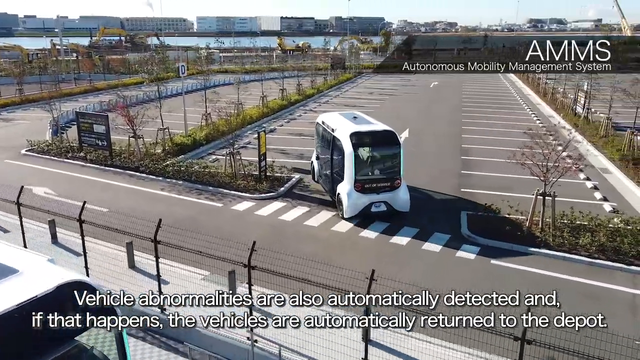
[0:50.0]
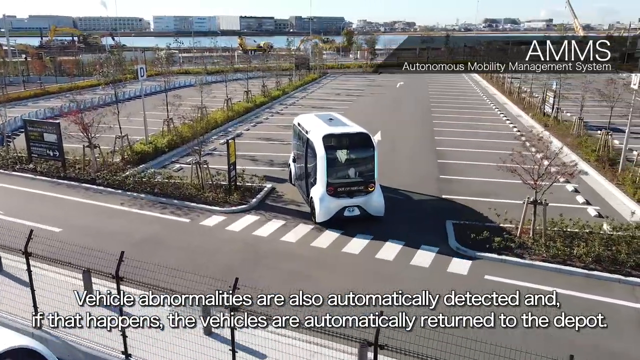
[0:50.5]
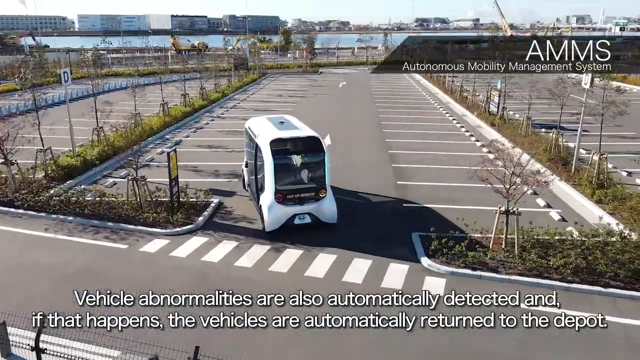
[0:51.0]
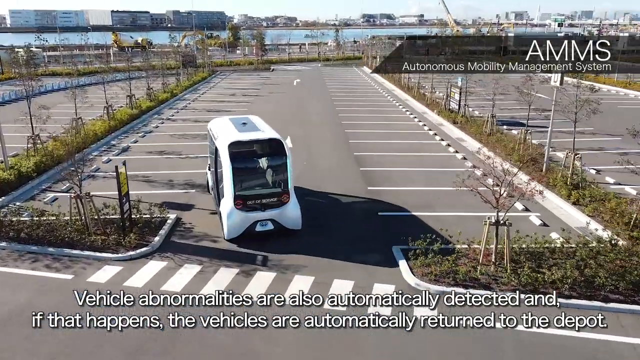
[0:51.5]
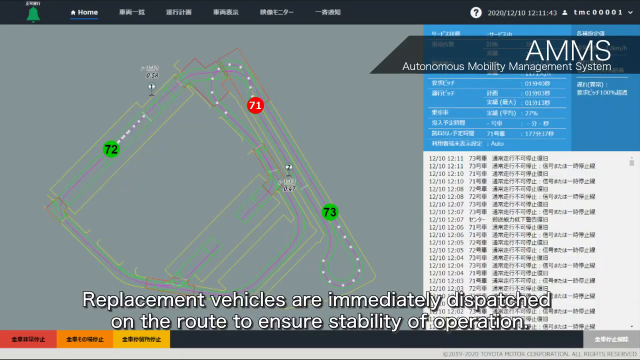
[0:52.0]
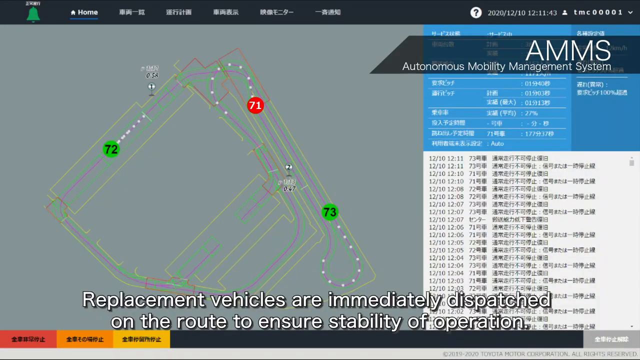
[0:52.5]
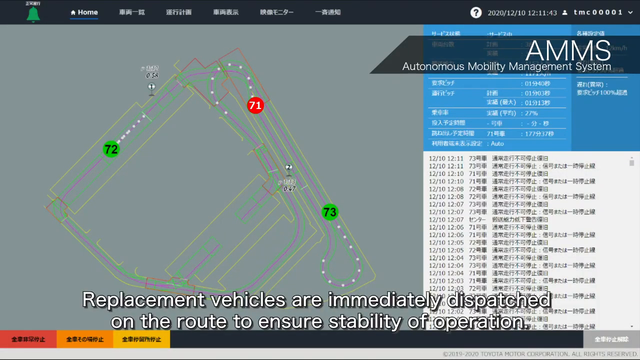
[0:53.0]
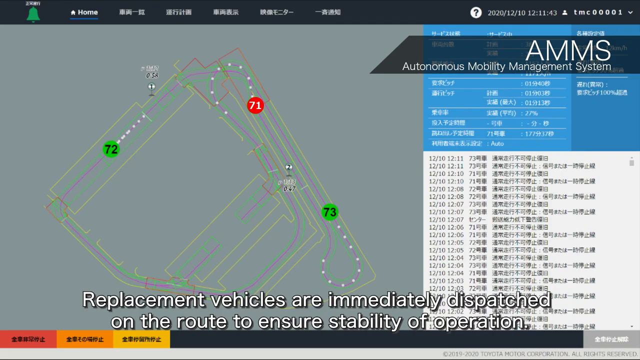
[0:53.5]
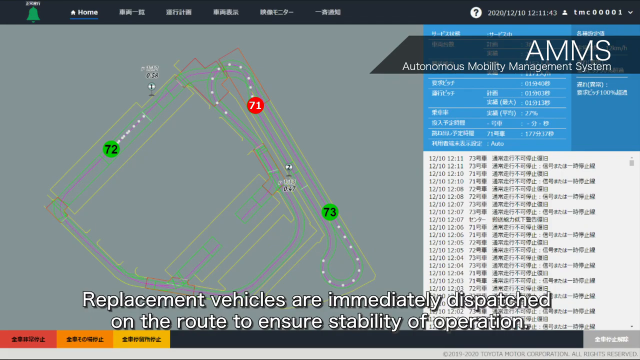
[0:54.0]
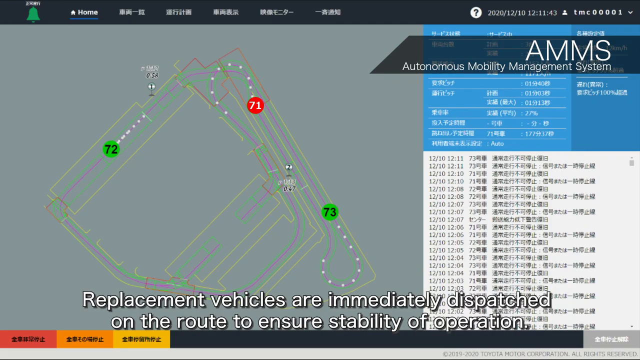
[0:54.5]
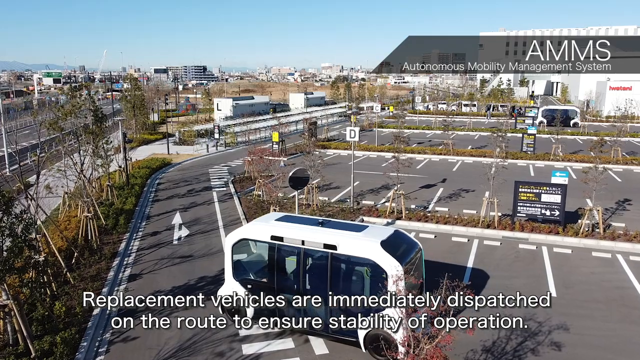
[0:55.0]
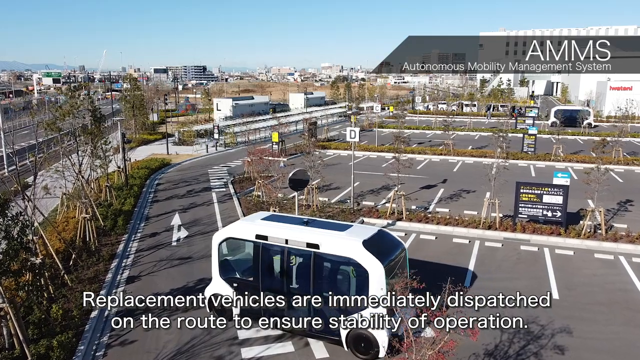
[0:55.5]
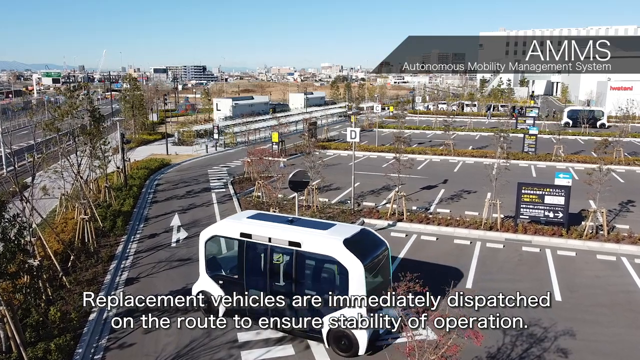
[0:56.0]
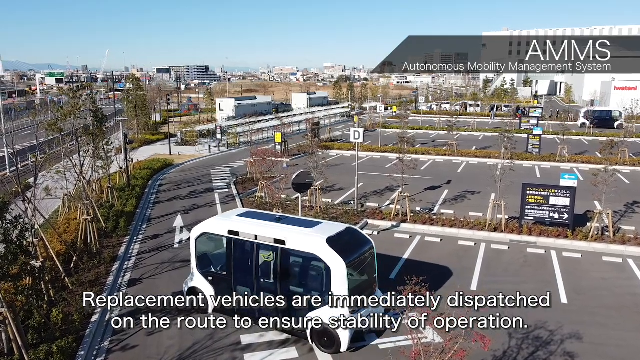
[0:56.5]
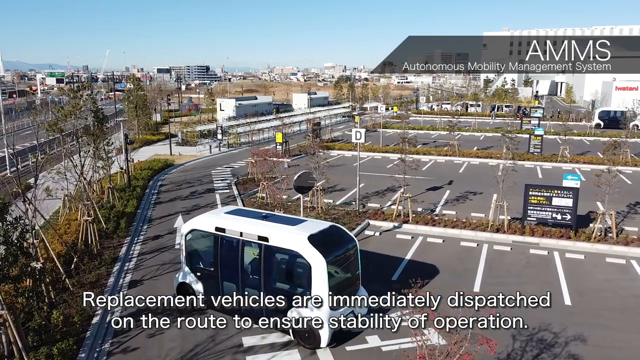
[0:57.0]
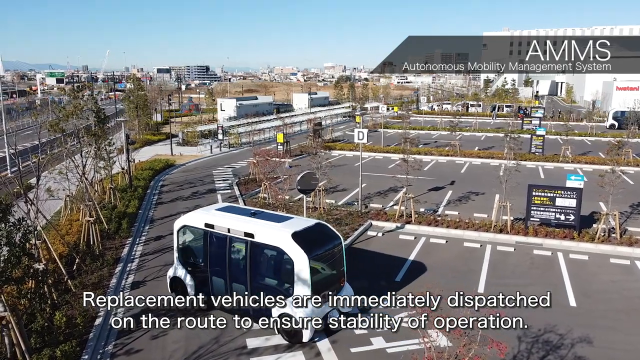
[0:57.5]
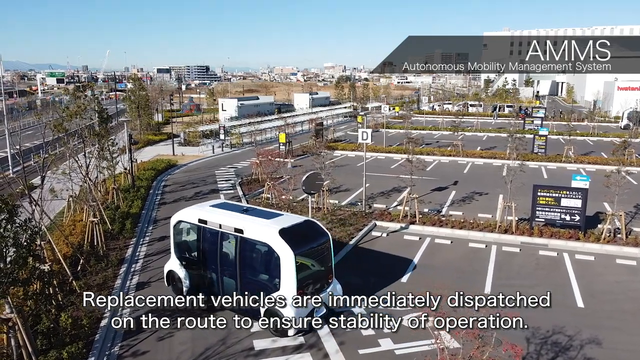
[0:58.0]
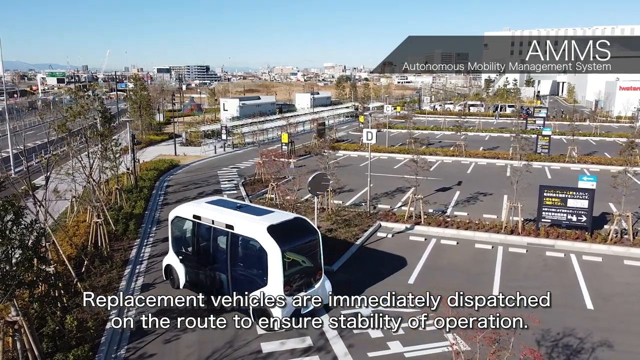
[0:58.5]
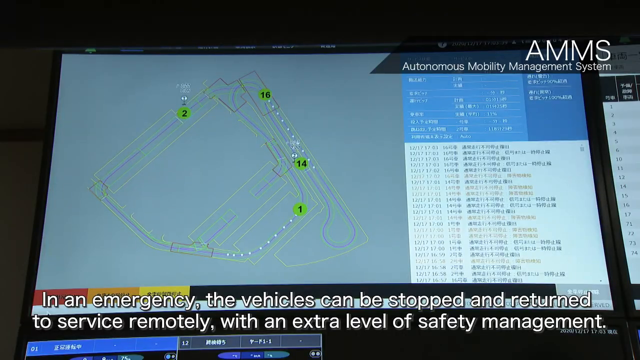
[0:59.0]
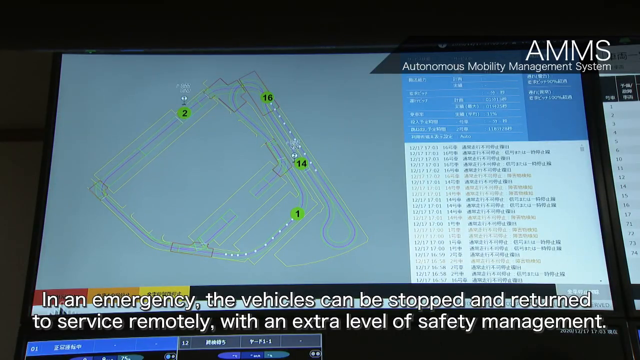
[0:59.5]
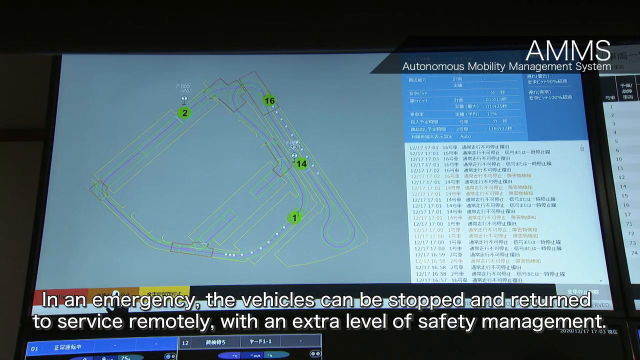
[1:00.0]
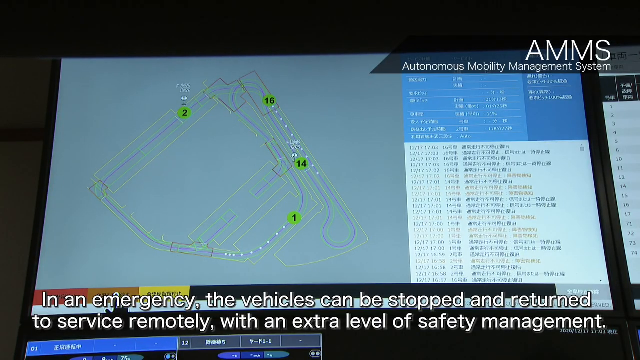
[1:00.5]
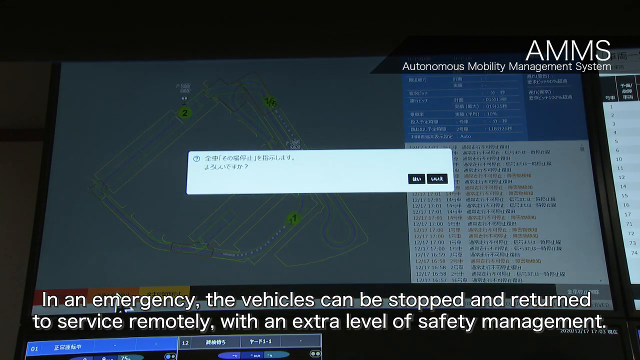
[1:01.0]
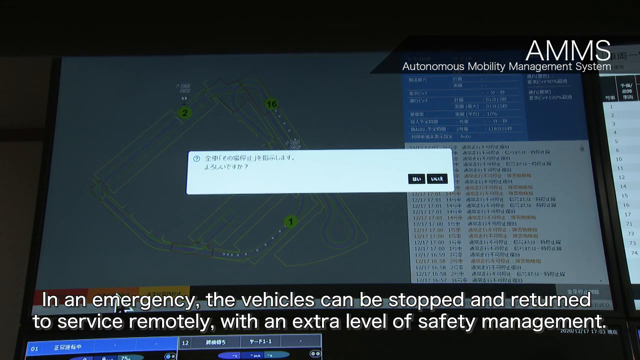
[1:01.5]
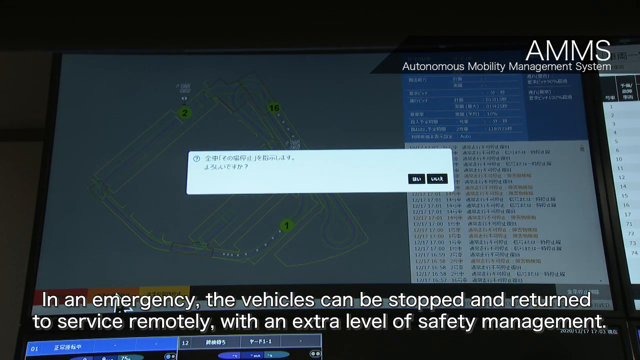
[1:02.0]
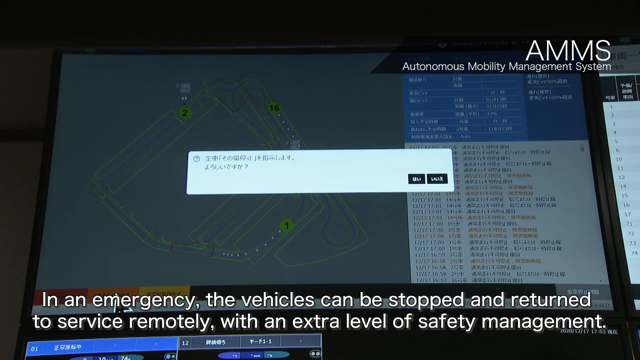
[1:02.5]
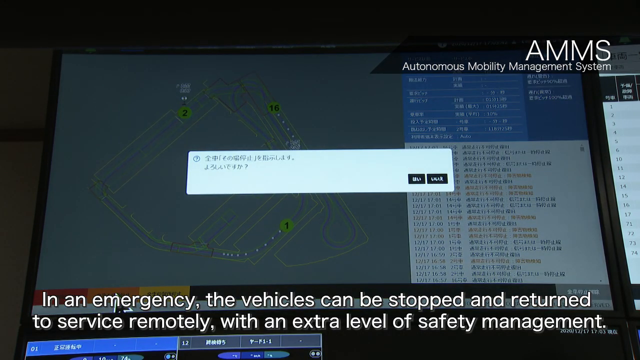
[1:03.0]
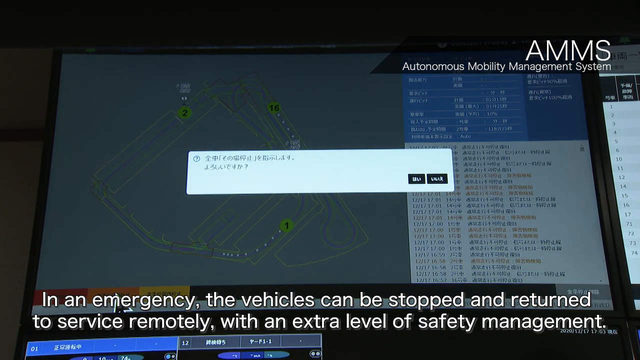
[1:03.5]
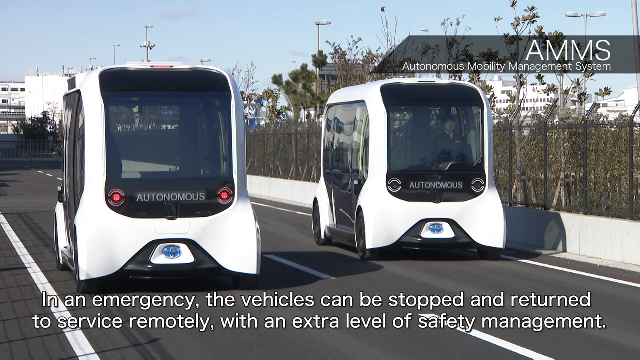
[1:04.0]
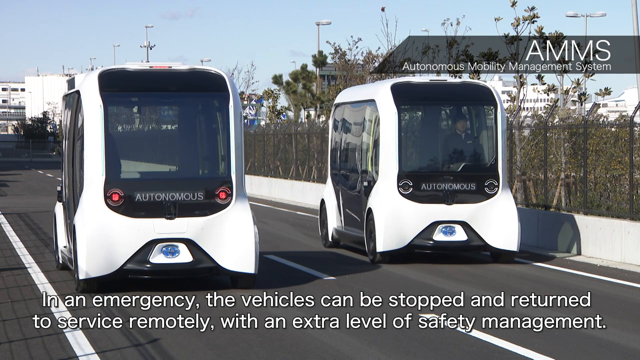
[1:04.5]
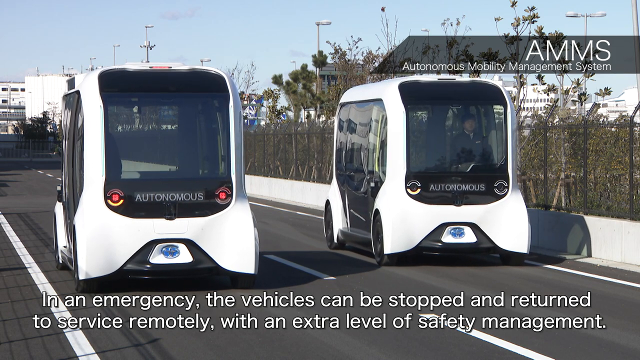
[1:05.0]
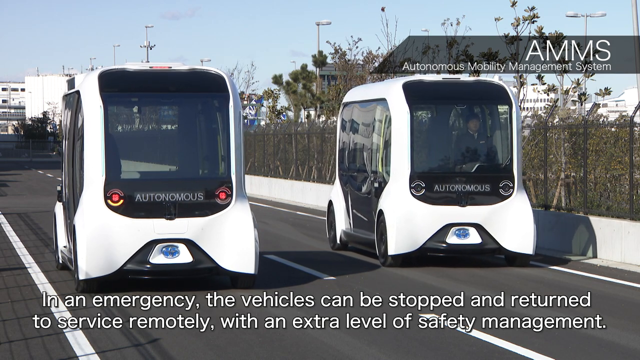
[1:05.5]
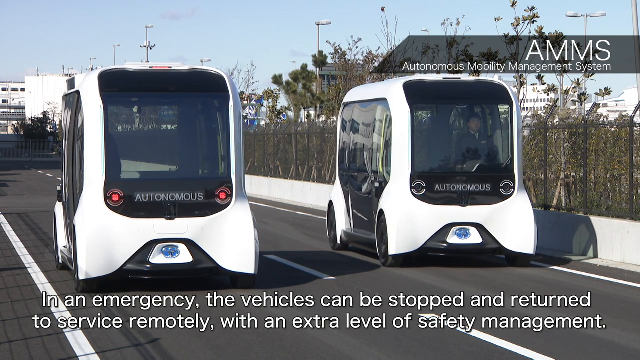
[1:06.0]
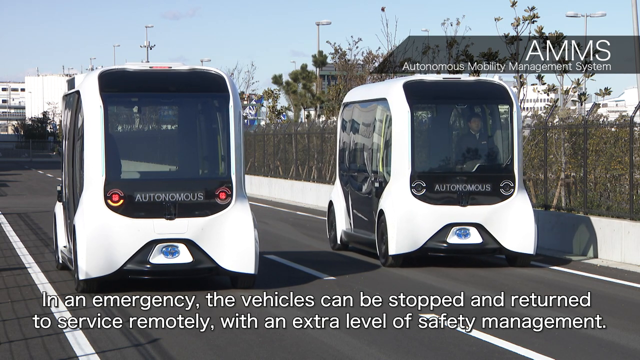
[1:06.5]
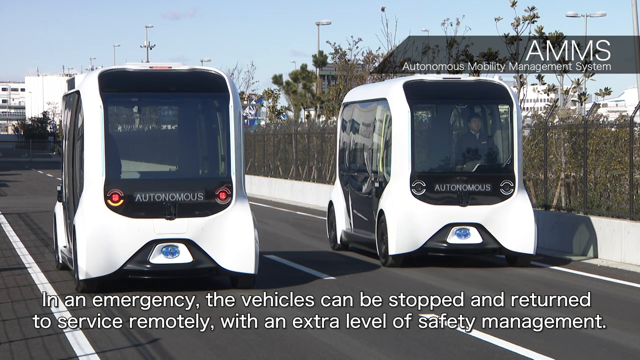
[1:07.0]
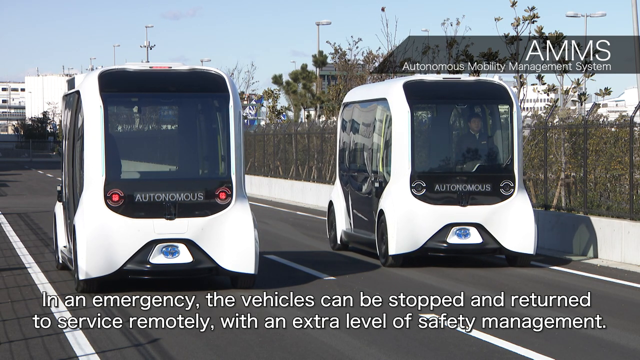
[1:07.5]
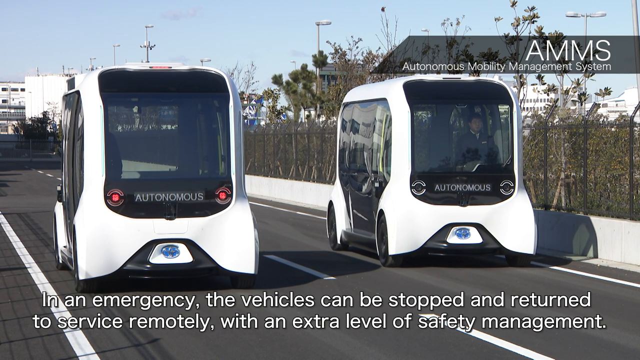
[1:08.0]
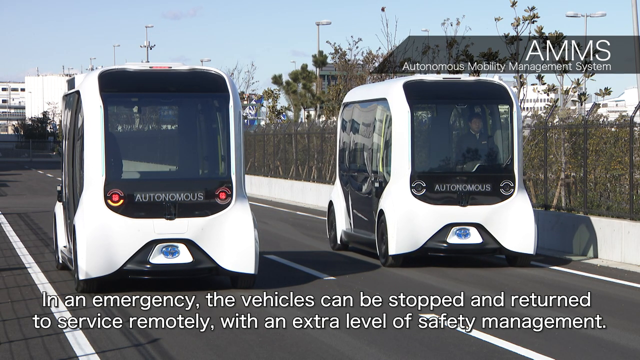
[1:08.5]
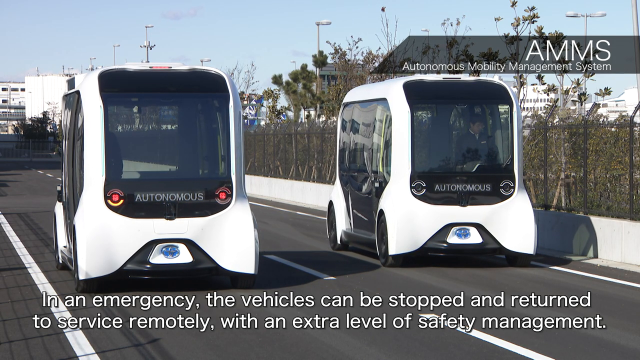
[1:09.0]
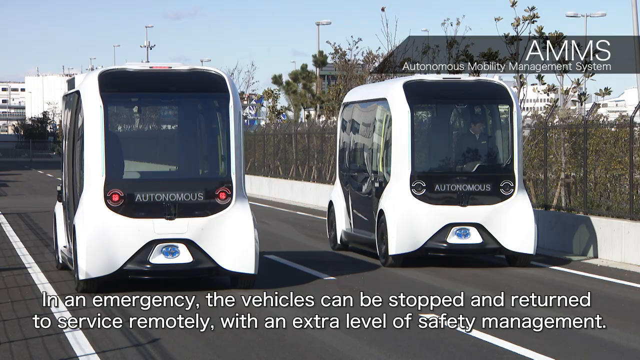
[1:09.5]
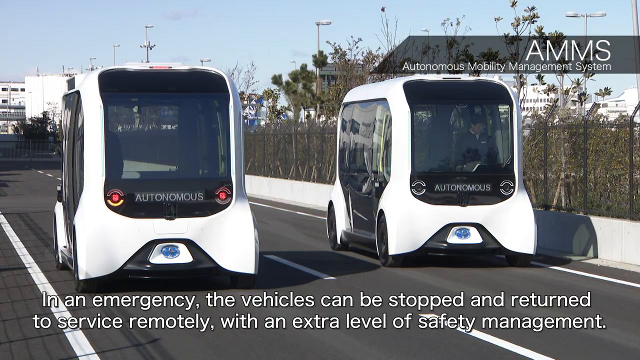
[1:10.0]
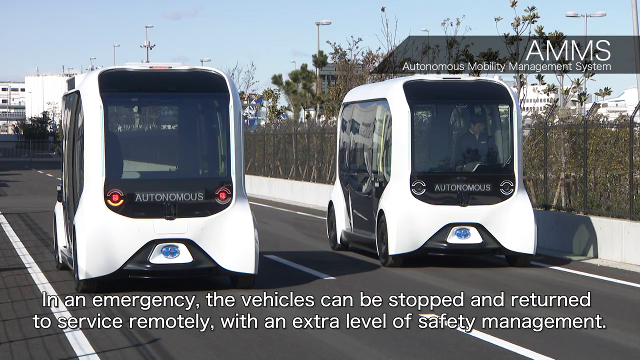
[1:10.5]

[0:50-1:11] The bus drives down the center of the parking lot. The same map from earlier appears with a caption stating "replacement vehicles are immediately dispatched on the route to ensure stability of operation." In the bottom right of the screen is a watermark reading "2019 to 2020 Toyota Motor Corporation. All rights reserved." The bus then takes a corner in the parking lot, and a screen shows another map with new designations and new information on dates and times. A caption states that if there is an emergency, the vehicles can be stopped and returned to service. Finally, the vehicle drives down the road with another next to it; the two look exactly the same.